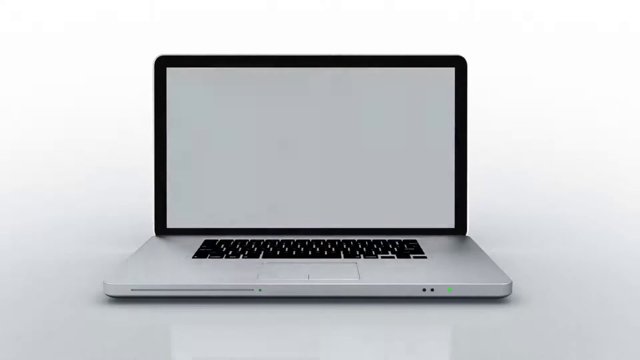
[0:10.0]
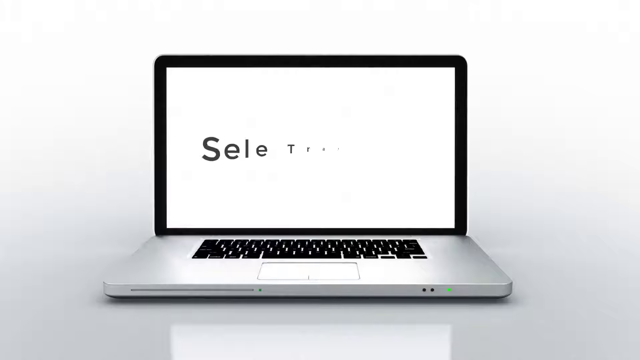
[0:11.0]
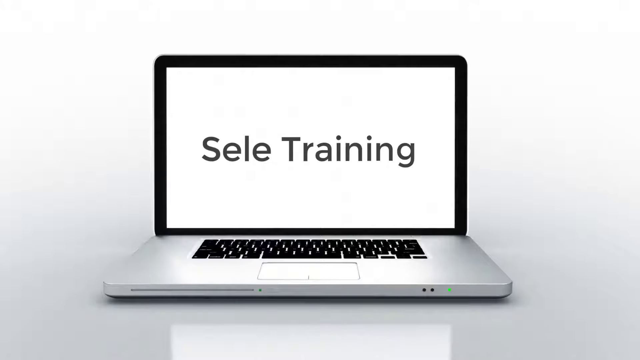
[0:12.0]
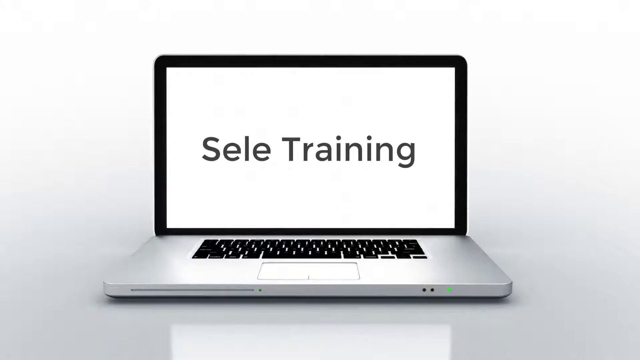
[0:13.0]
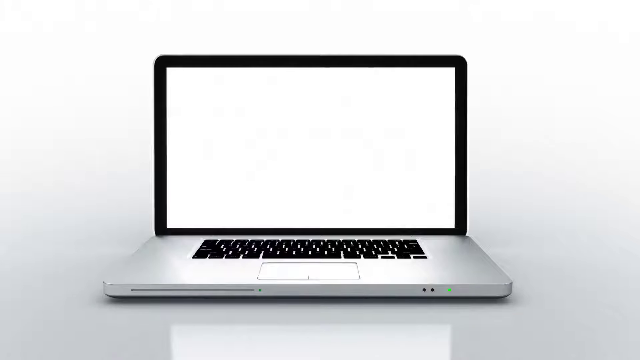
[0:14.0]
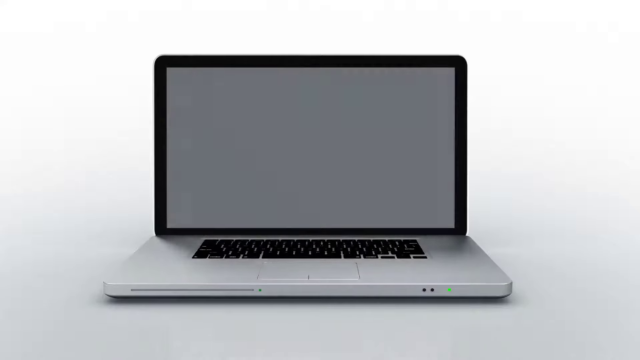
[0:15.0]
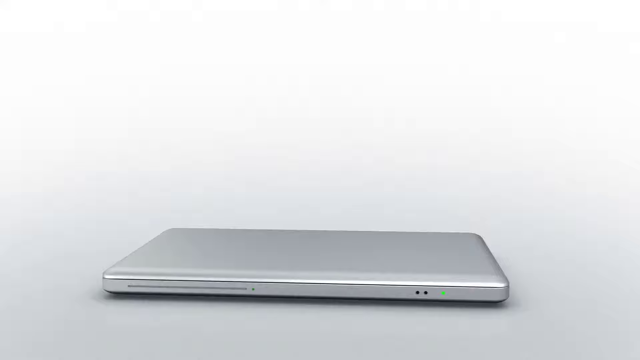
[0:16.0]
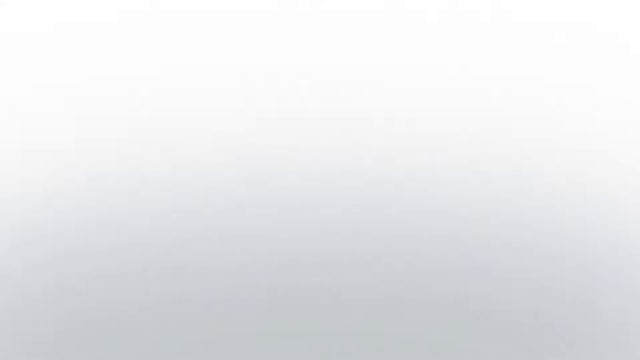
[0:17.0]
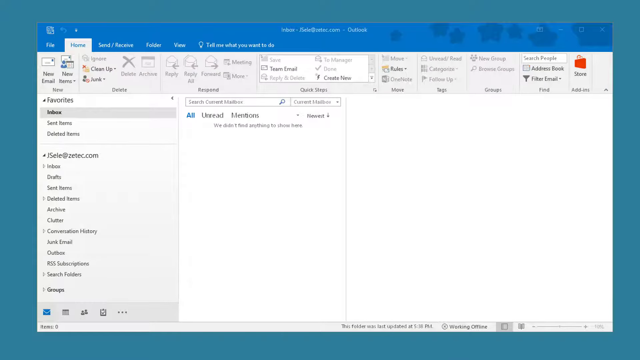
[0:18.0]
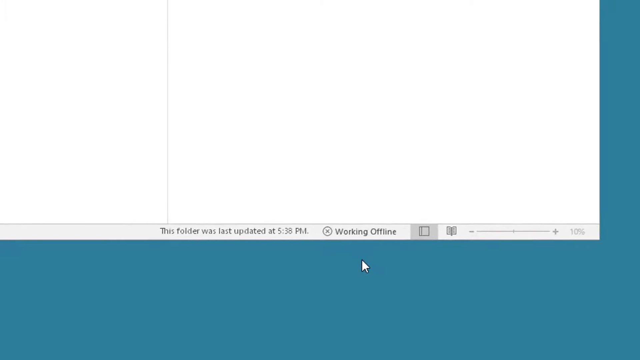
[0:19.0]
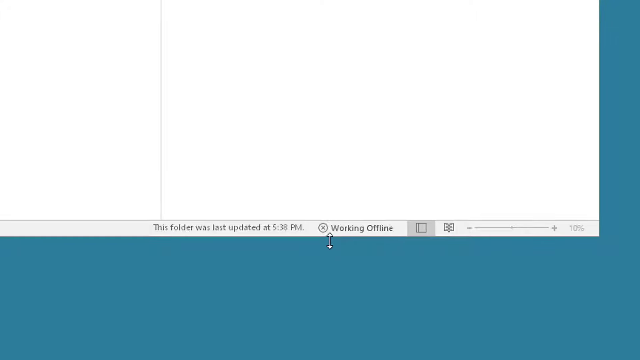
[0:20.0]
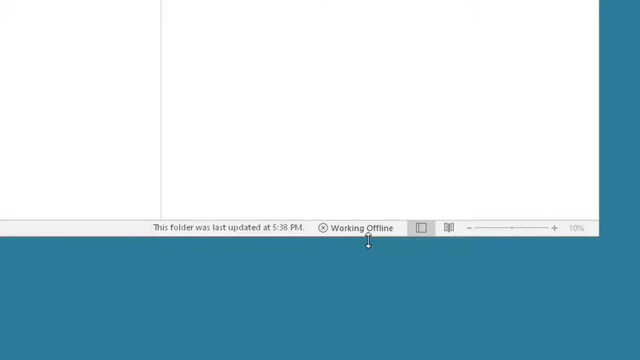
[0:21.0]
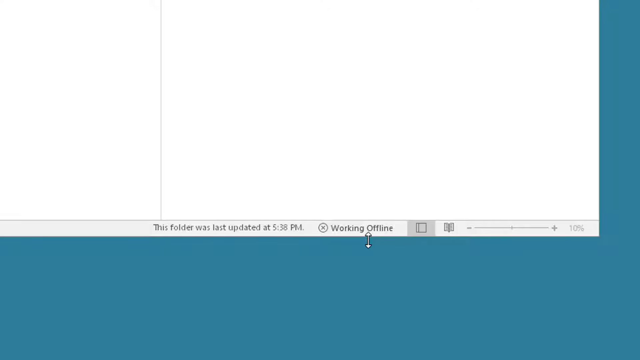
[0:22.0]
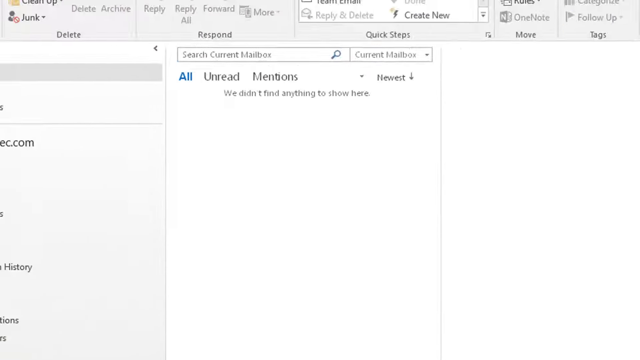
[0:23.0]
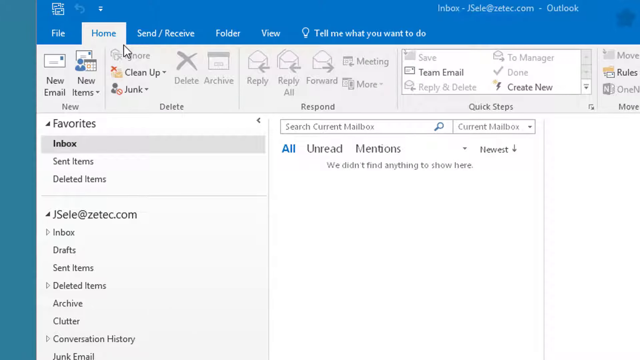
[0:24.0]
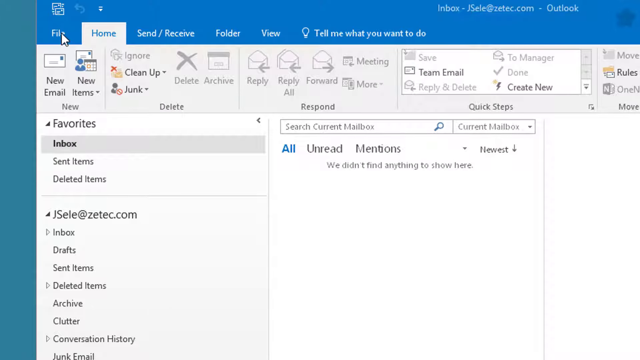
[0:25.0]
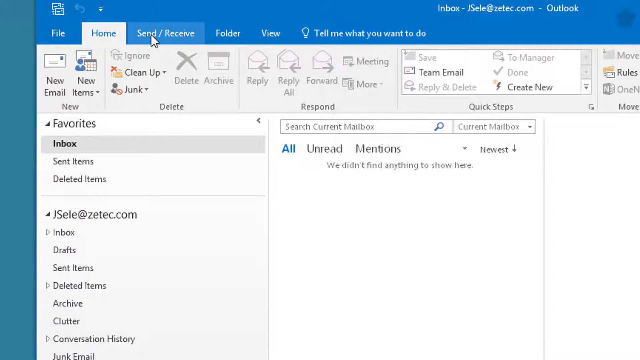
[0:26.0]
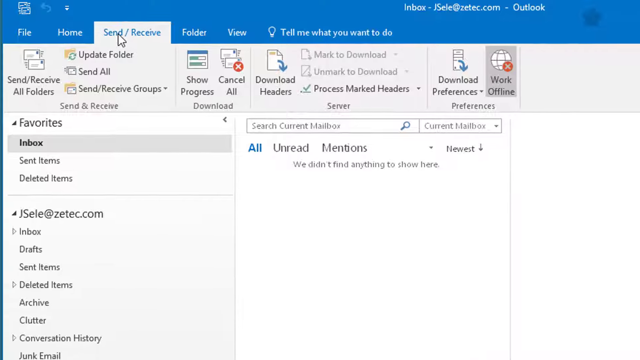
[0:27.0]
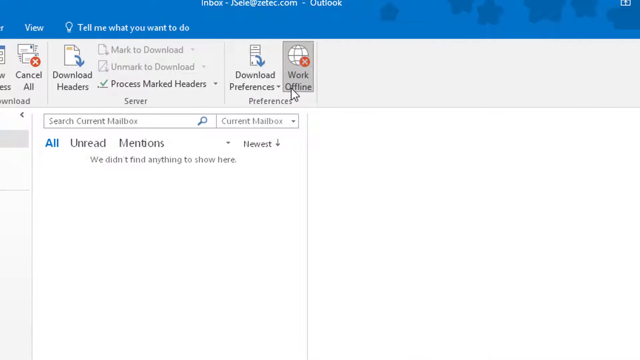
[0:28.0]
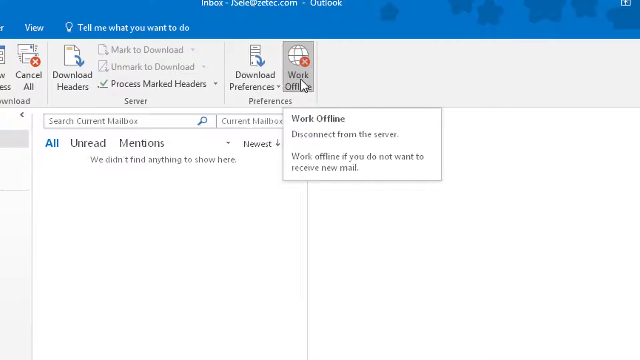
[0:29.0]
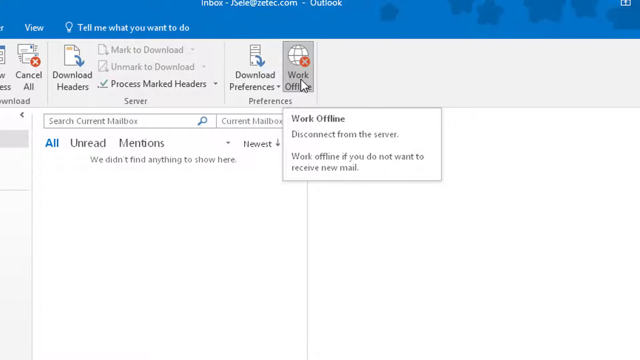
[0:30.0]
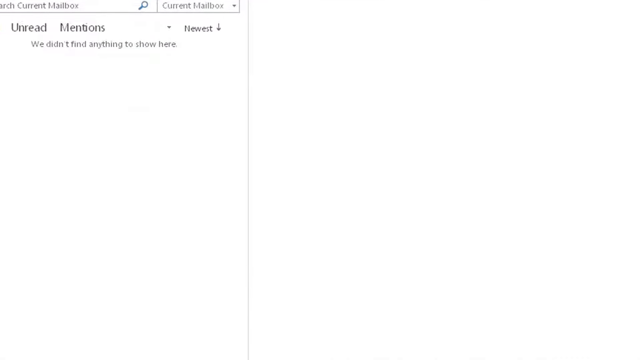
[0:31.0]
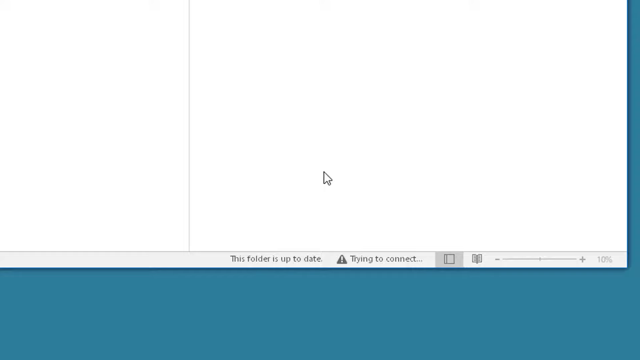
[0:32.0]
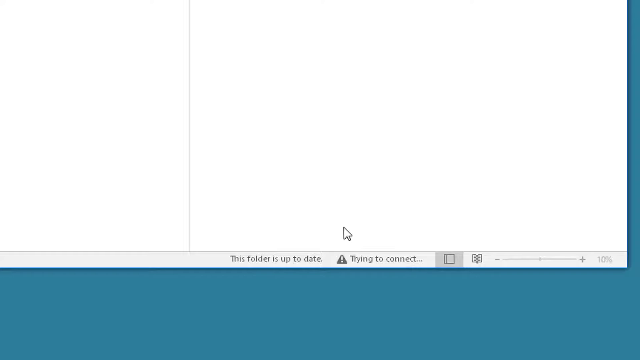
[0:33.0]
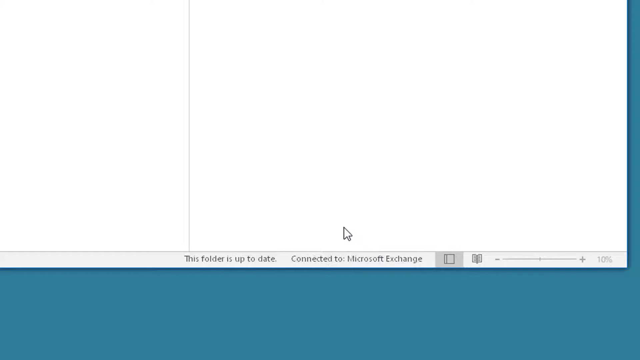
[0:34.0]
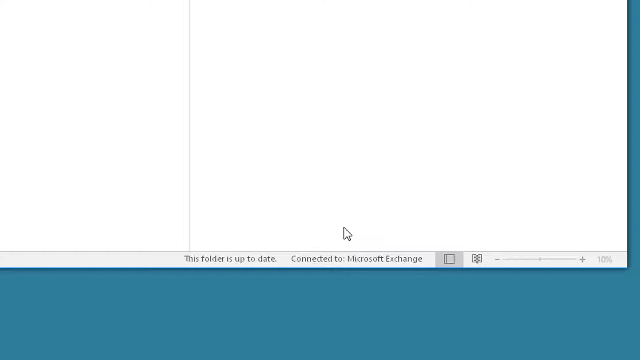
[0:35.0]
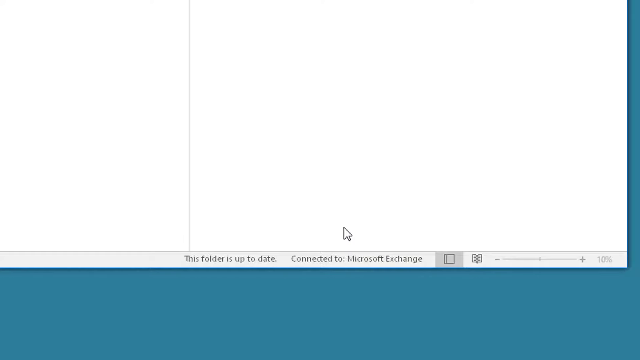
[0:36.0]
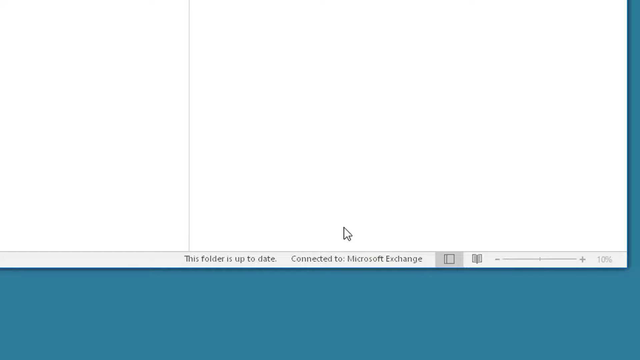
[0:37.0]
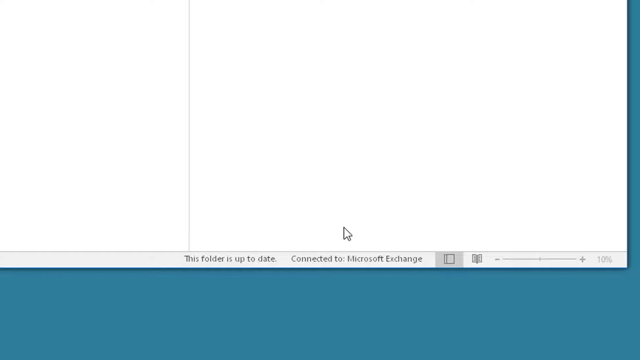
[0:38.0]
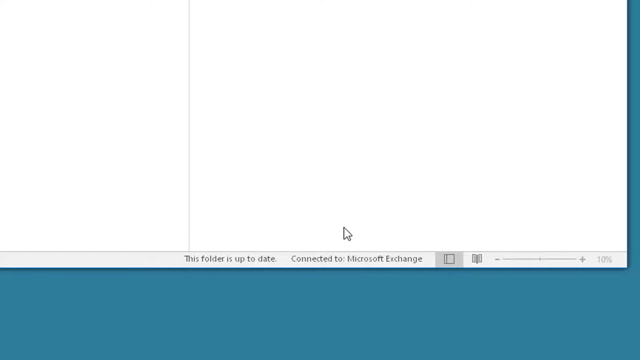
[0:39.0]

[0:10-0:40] An image of a laptop appears, and the words "Selle training" come up on its screen. They quickly disappear as the laptop is physically shut and spins away off the screen. The view returns to the email account of jsele@ztech.com, which again shows that the user is offline. A send and receive is performed, apparently in an attempt to connect back to the server. The account of J Sele has an inbox, an archive, a folder called Clutter and another called Conversation History. The home view of the account is open, with a new email option at the top left of the page and options to clean up or move items to junk.